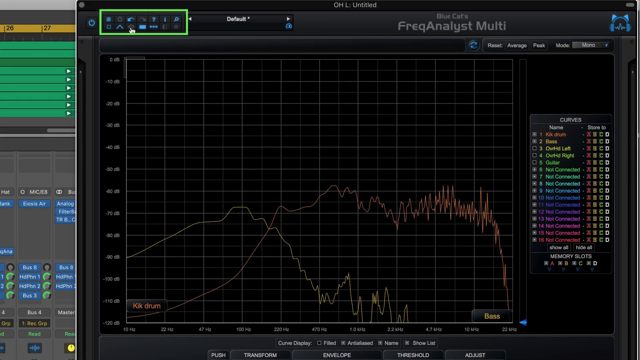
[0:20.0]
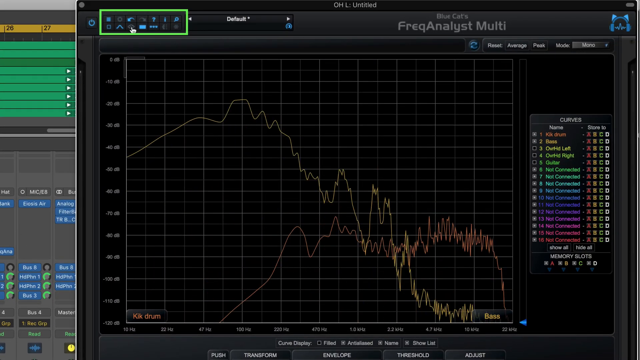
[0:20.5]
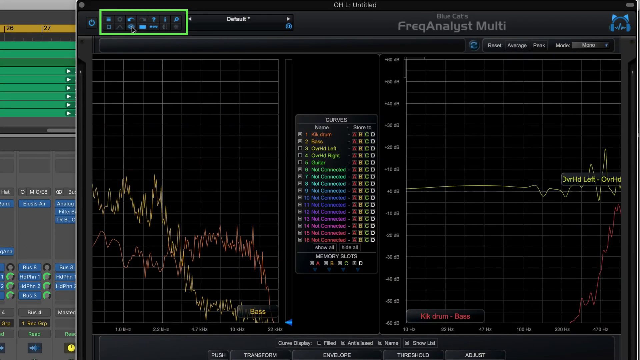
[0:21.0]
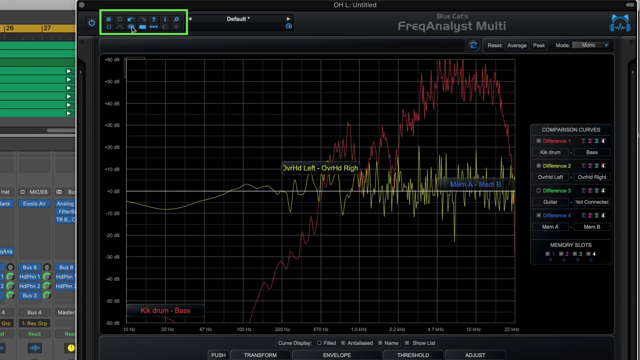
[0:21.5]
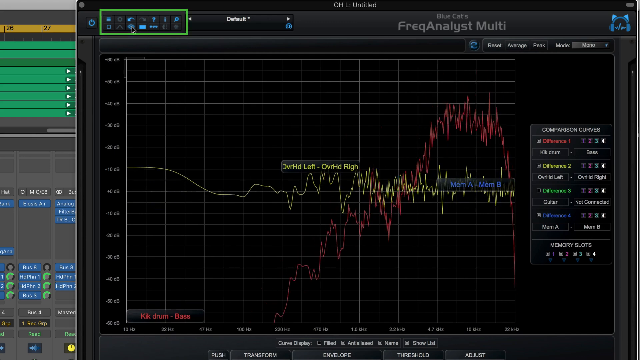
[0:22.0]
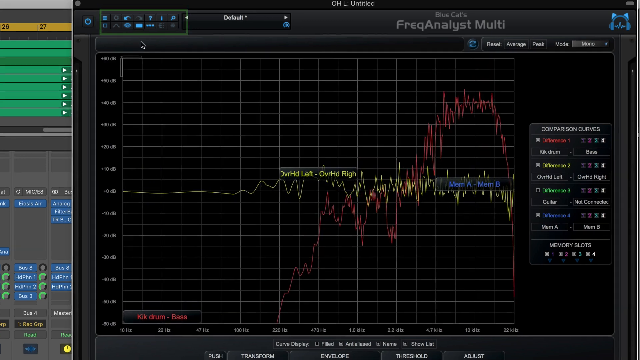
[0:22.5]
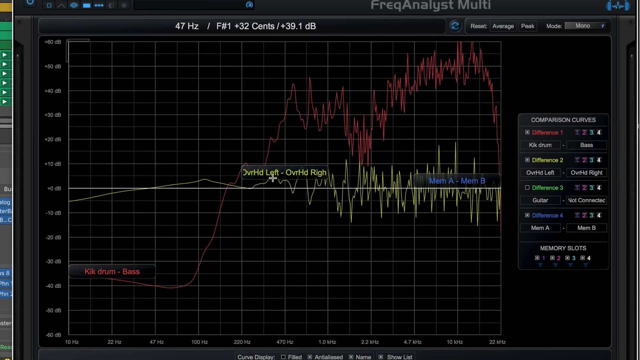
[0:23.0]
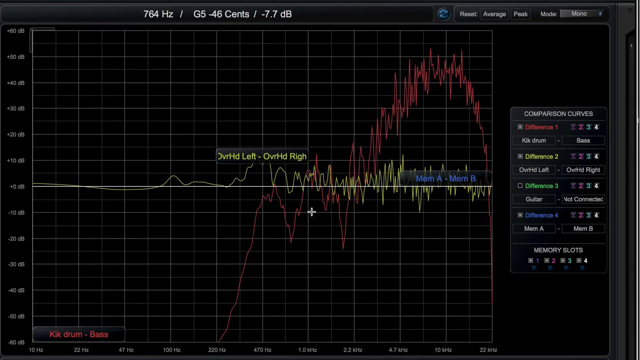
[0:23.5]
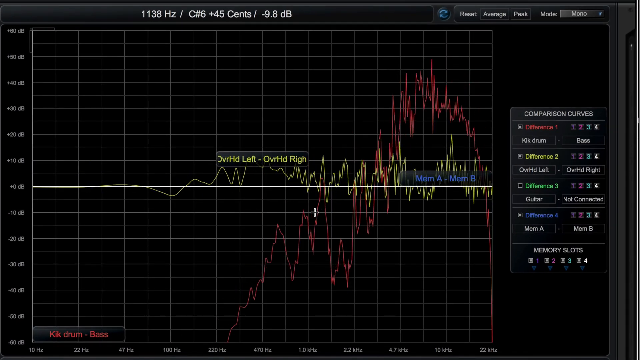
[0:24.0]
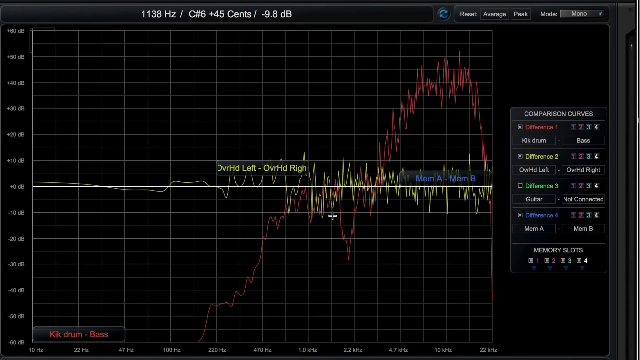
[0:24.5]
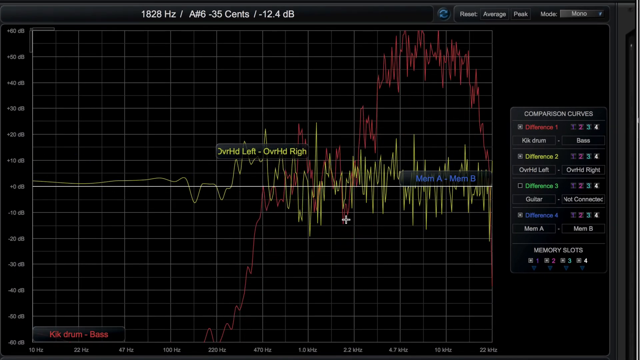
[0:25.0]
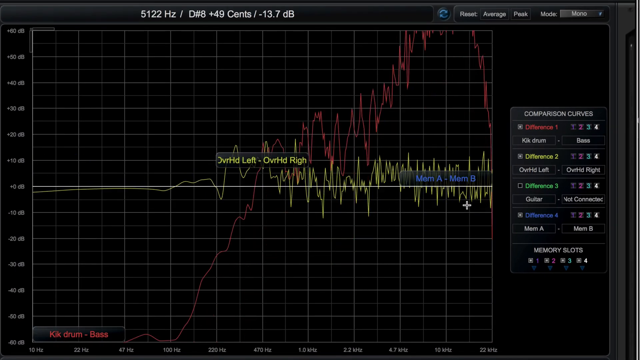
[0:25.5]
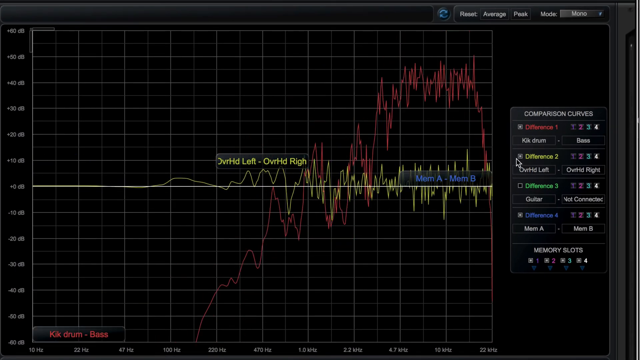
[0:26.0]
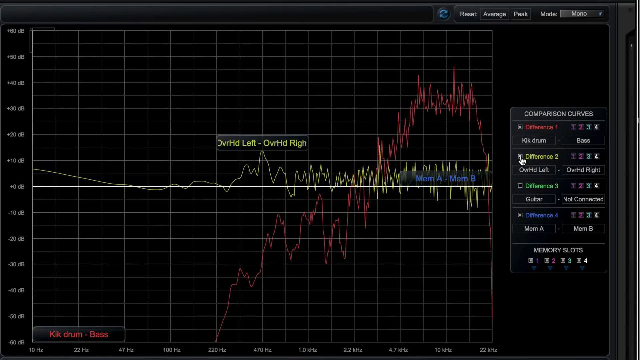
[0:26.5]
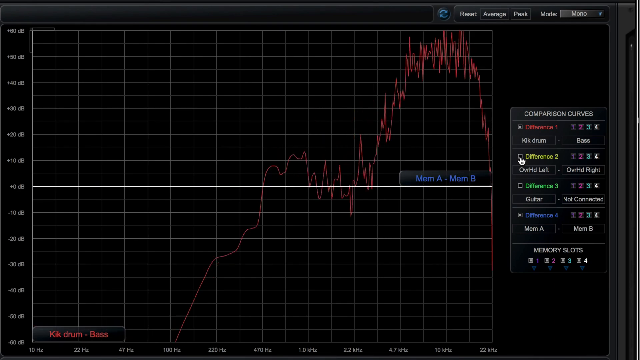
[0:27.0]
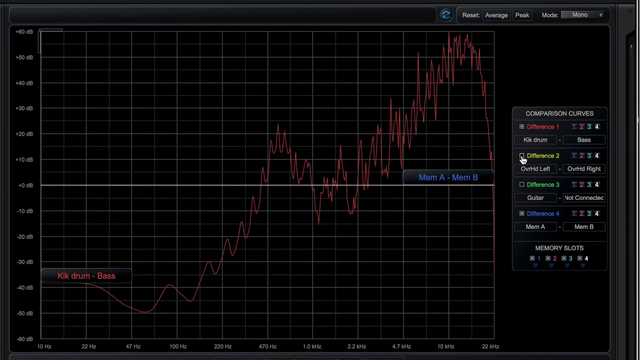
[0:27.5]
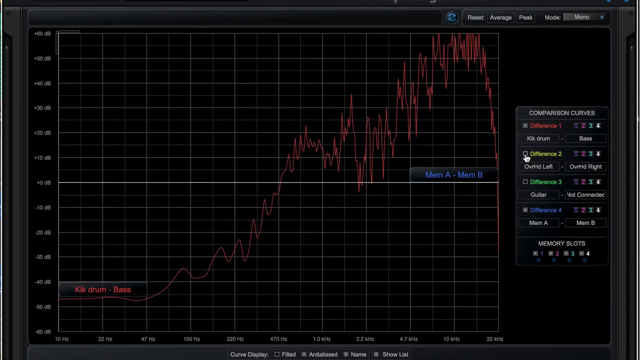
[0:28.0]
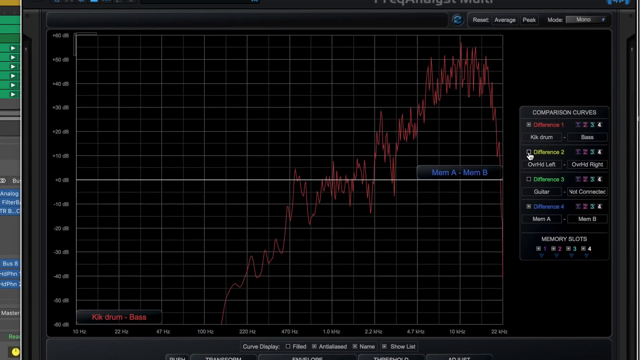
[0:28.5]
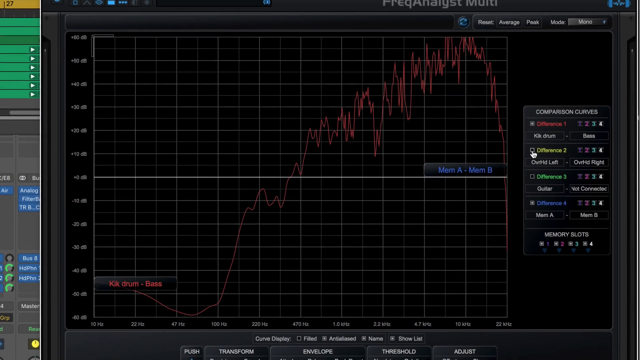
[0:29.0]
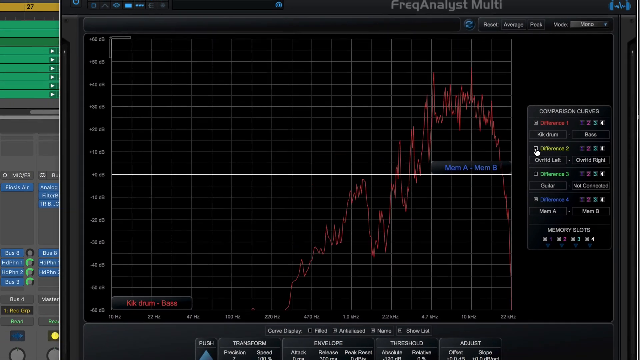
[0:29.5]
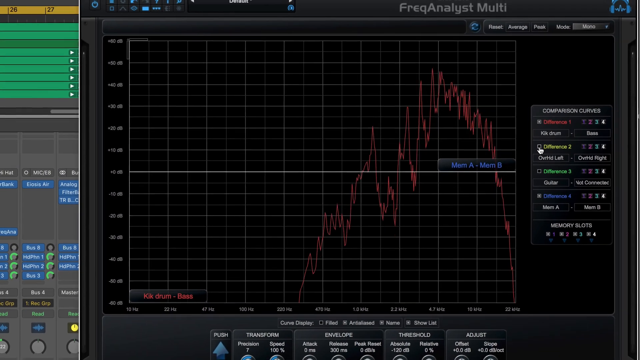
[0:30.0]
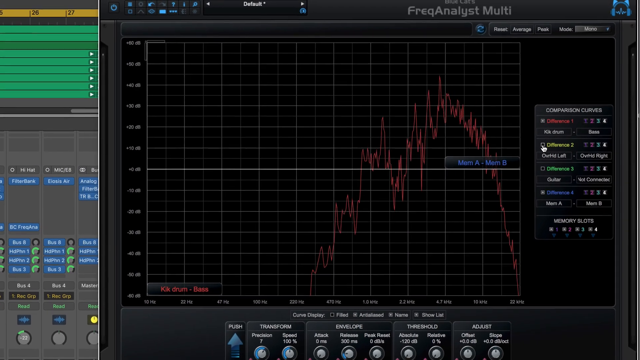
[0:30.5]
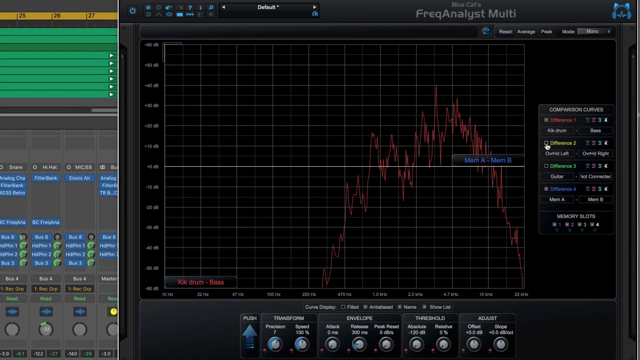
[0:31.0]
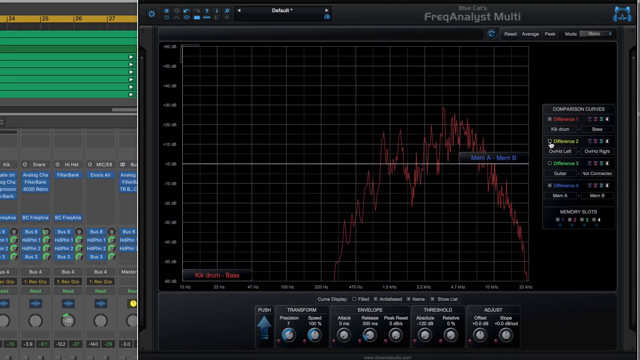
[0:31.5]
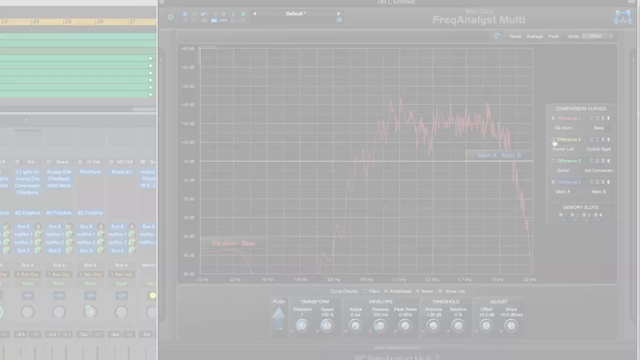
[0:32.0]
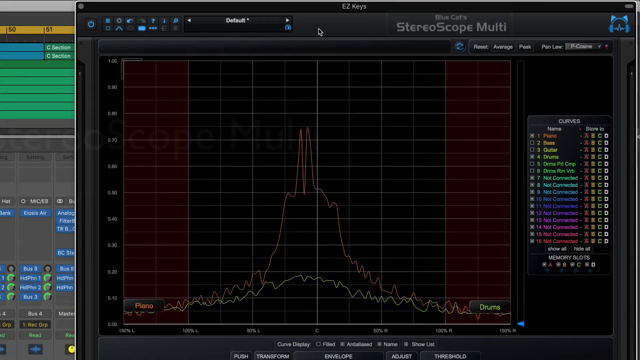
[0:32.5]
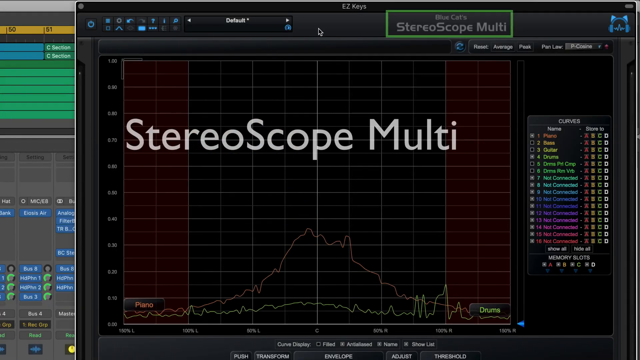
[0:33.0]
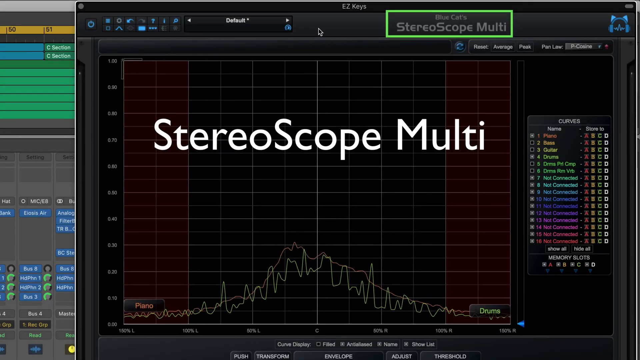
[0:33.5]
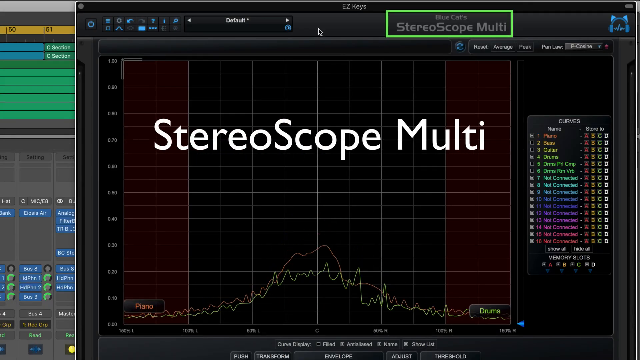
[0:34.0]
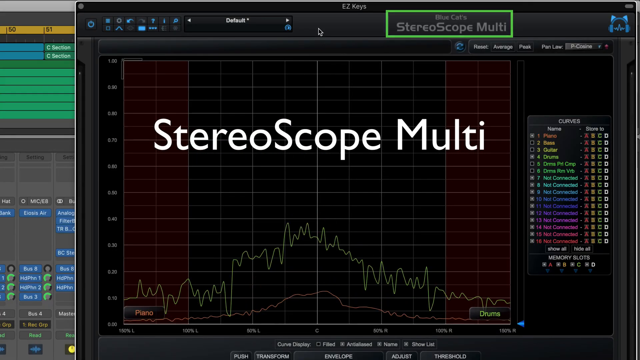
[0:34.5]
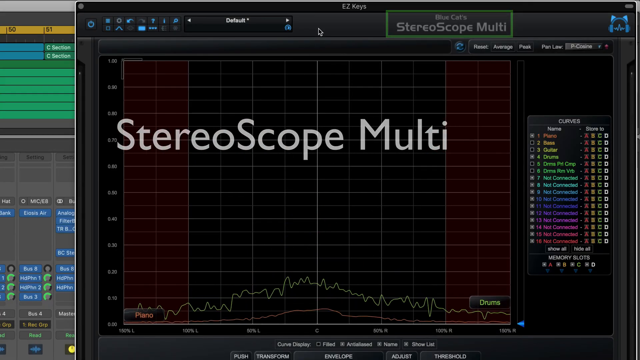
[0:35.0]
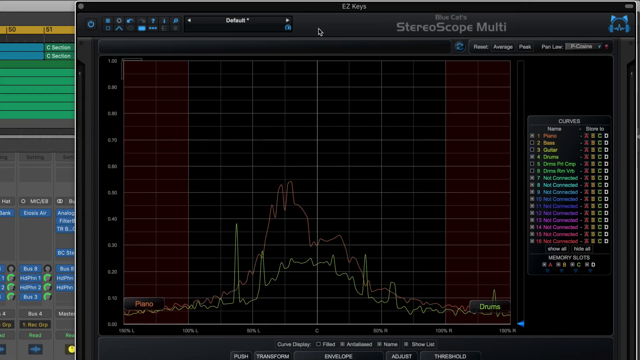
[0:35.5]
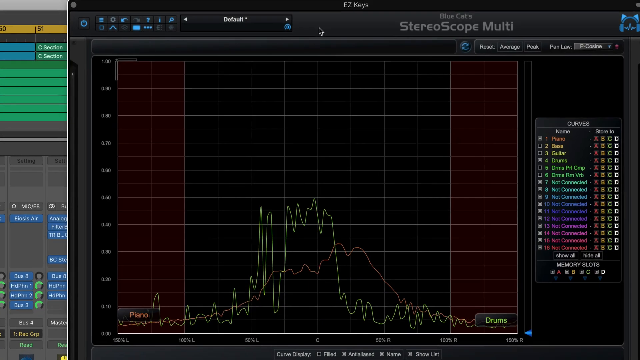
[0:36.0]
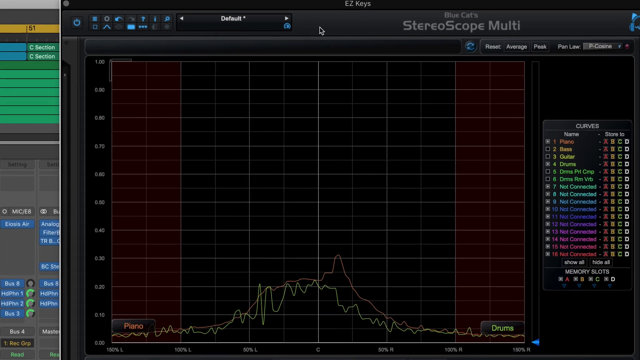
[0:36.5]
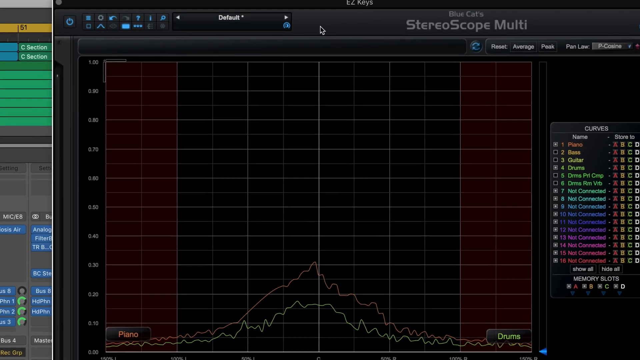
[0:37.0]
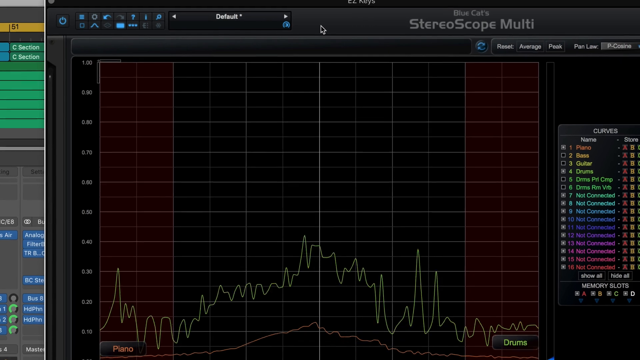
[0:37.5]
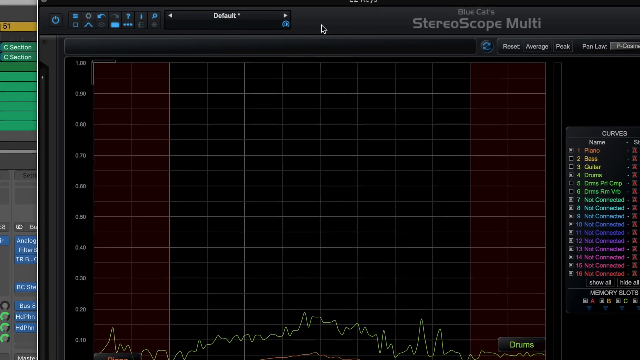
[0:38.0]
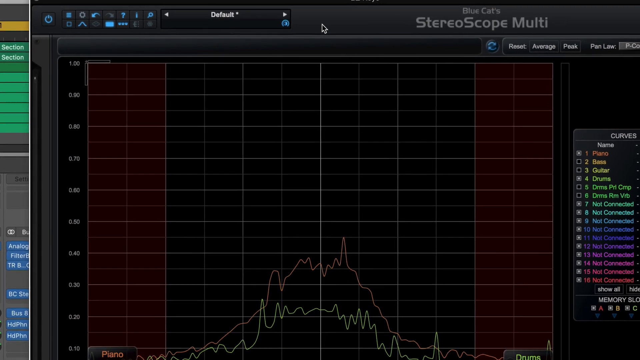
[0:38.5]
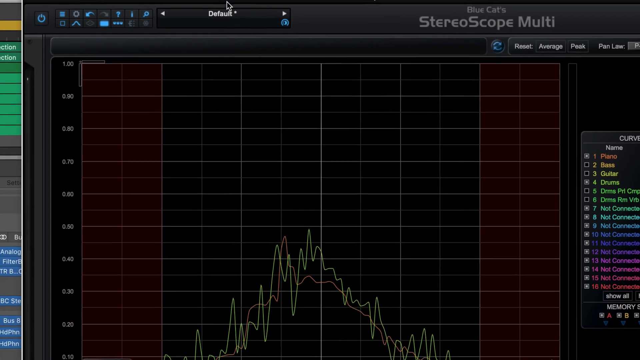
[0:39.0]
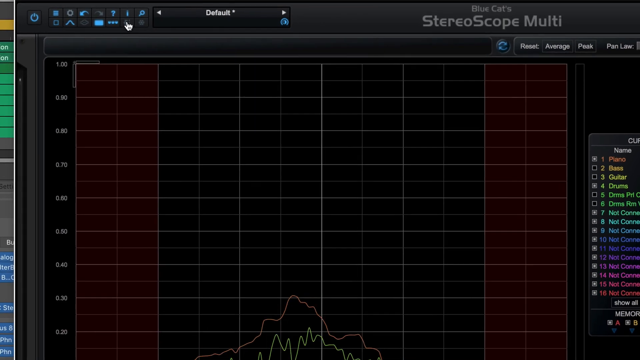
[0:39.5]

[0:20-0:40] The same screen appears and immediately shifts to a new one that slides in from the right: a frequency meter in a pinkish color, bouncing around a lot, with the text "stereoscope multi" and two lines connected together that bounce around. It then goes back to the first screen, with green and blue on the left side and a gold stripe on top, where a couple of frequency lines crisscross almost in the middle of the screen; one gets very squiggly, goes straight across and then straight down, while the other plummets straight down almost immediately. The screen changes very quickly. Text on the left side reads "overall high," and "stereoscope multi" slides across the screen several times. Somebody clicks on different things with the mouse, but the writing is too small to read. On the right side is writing colored orange, yellow, green, blue and purple, going into light shades of red or violet. There is writing in the charts, all too small to read.